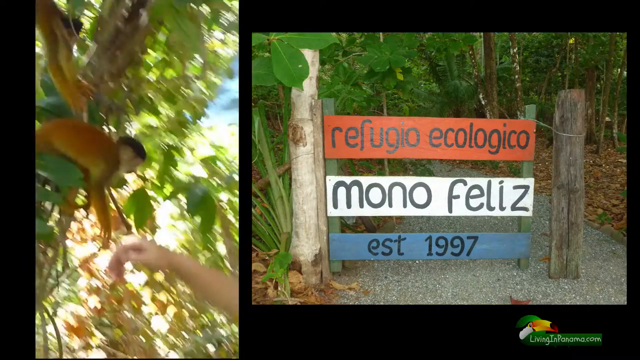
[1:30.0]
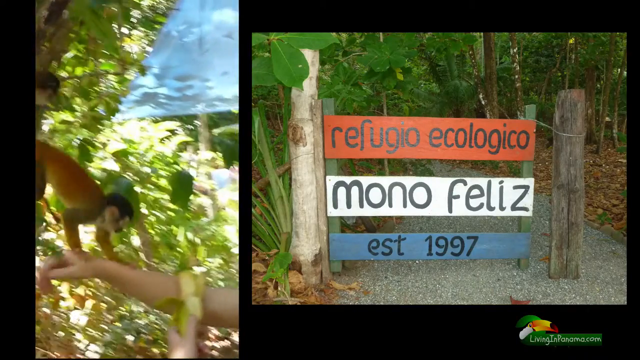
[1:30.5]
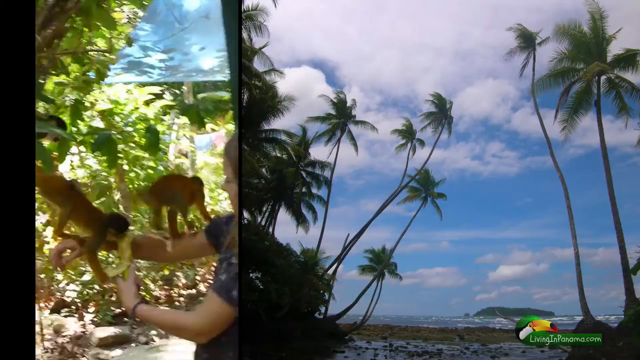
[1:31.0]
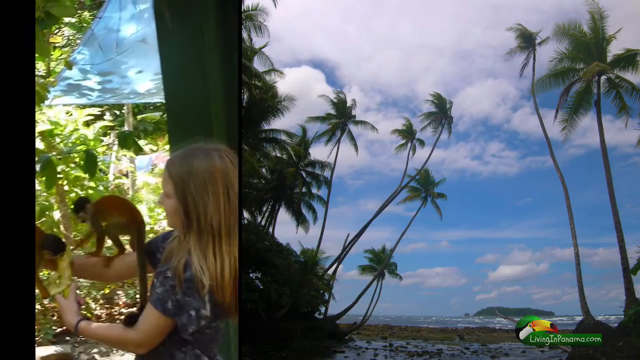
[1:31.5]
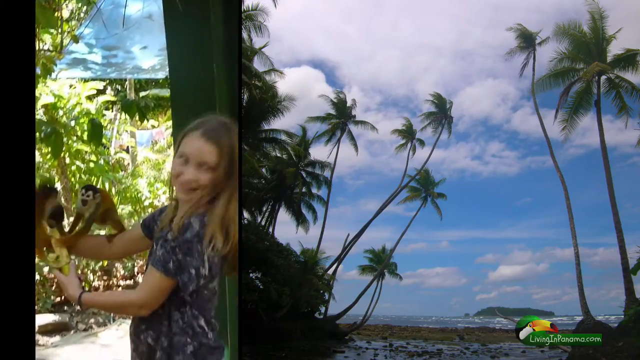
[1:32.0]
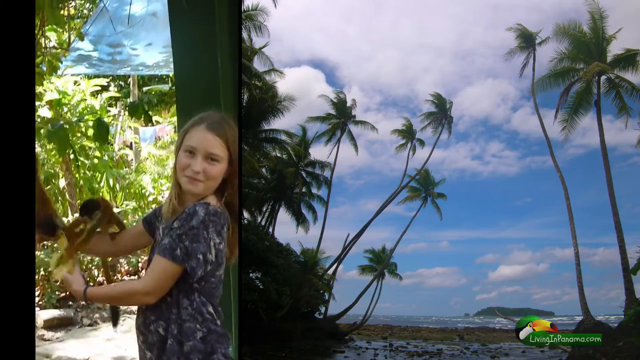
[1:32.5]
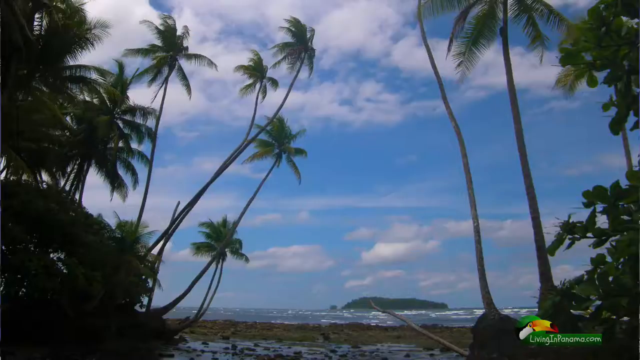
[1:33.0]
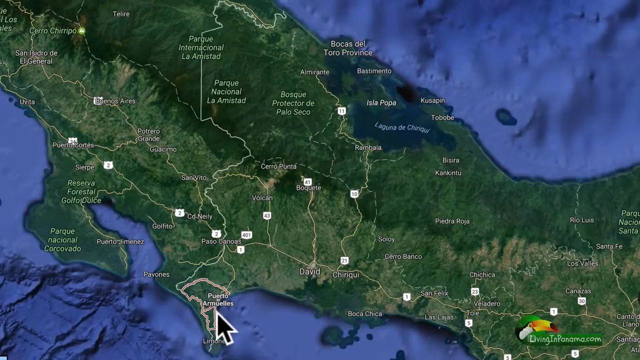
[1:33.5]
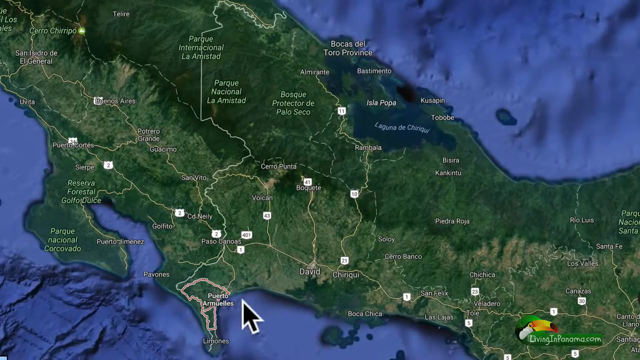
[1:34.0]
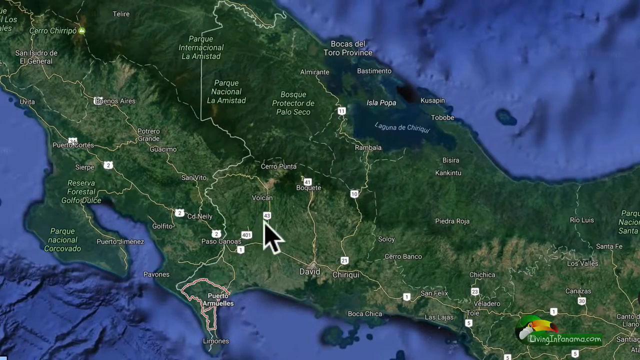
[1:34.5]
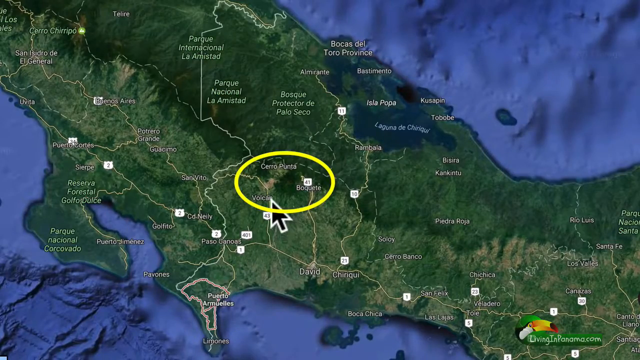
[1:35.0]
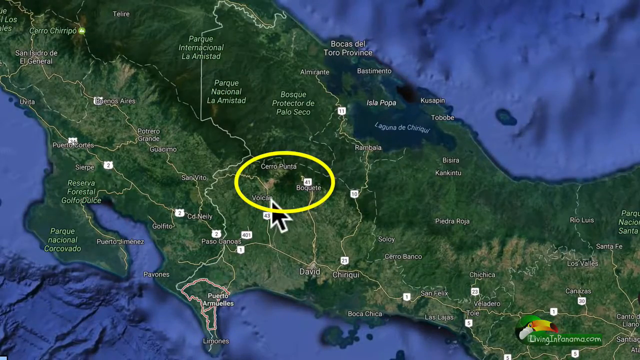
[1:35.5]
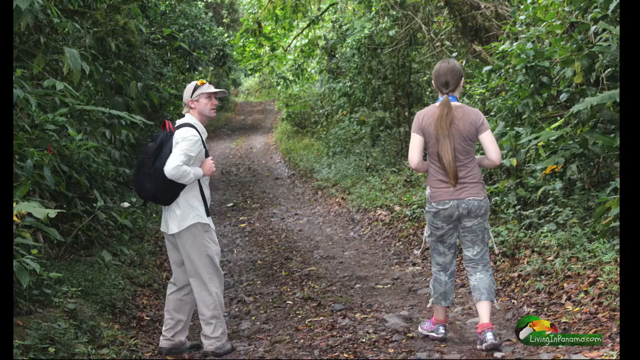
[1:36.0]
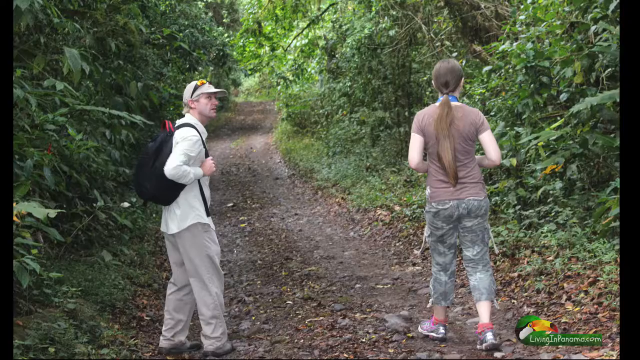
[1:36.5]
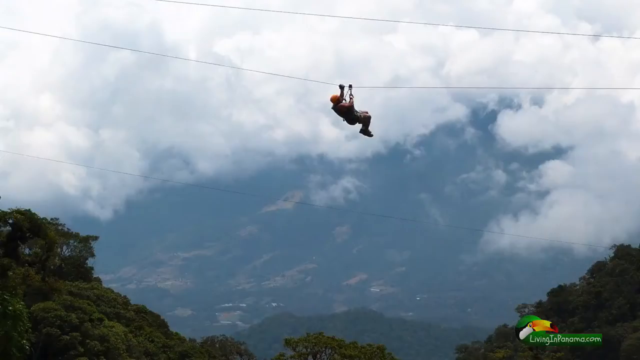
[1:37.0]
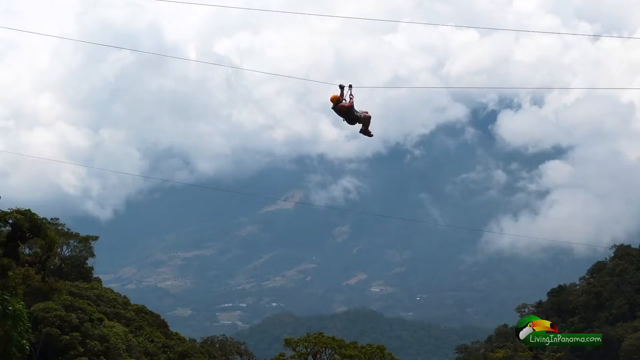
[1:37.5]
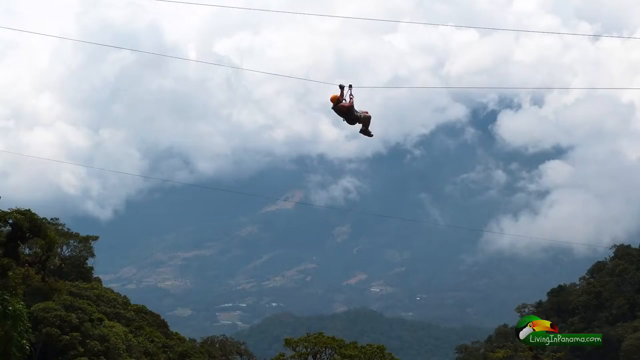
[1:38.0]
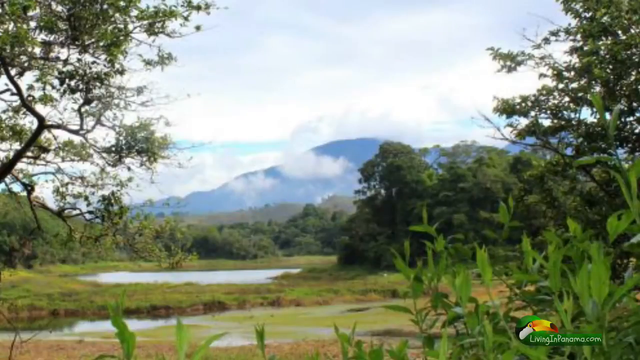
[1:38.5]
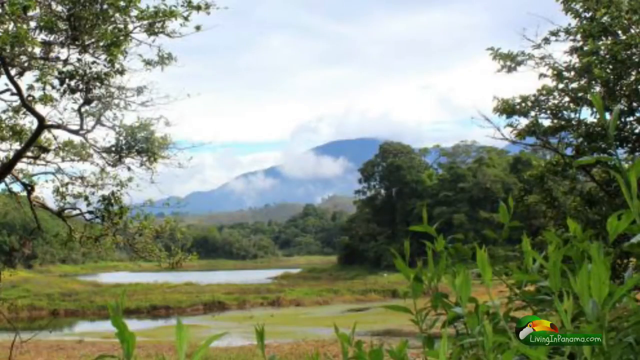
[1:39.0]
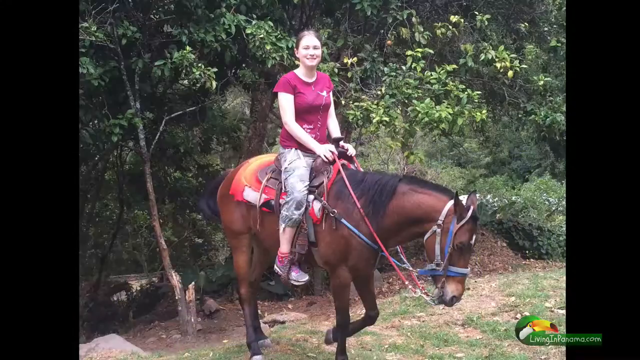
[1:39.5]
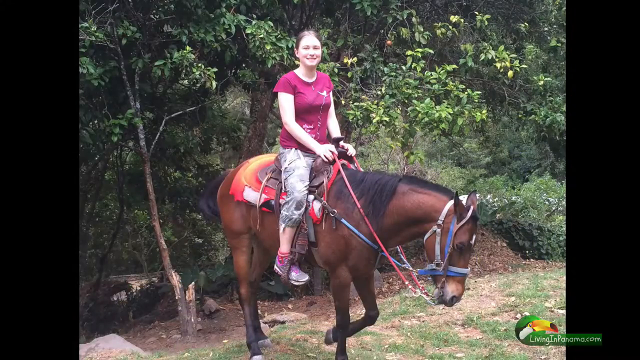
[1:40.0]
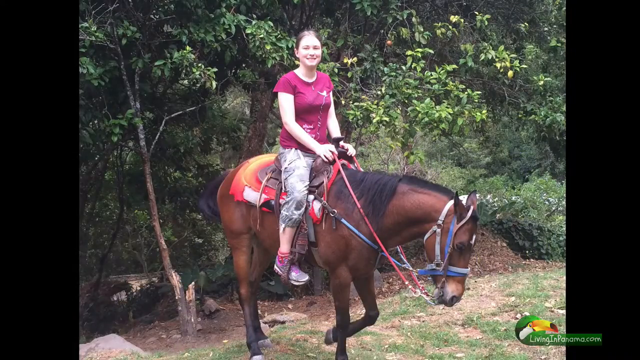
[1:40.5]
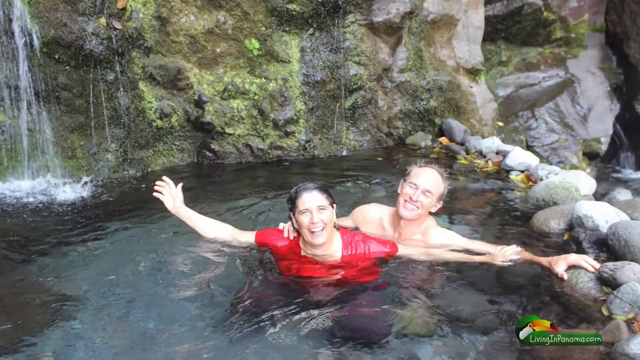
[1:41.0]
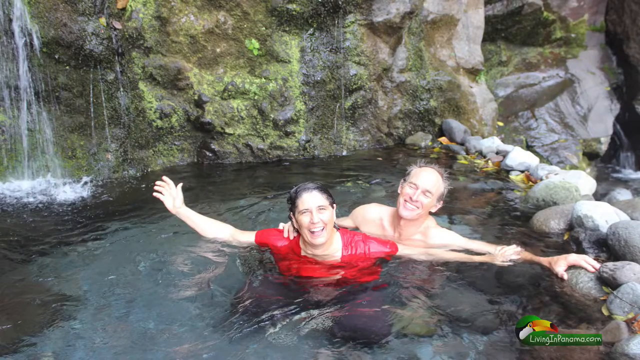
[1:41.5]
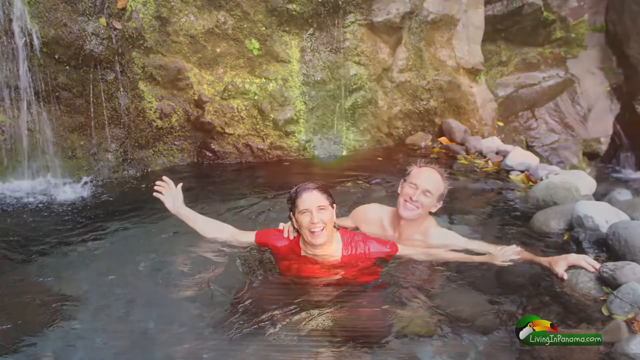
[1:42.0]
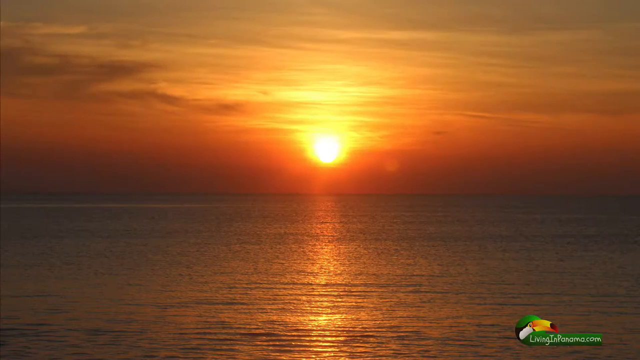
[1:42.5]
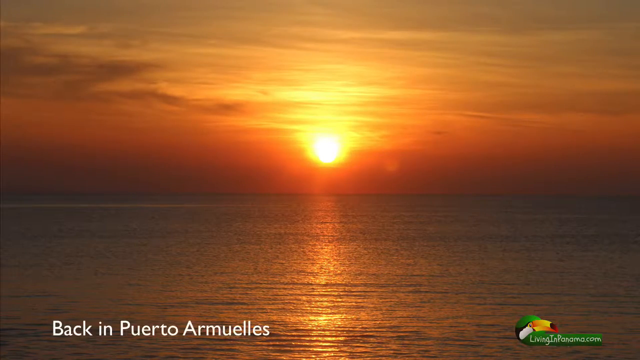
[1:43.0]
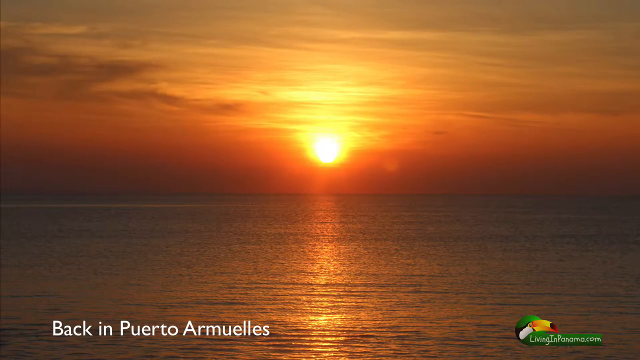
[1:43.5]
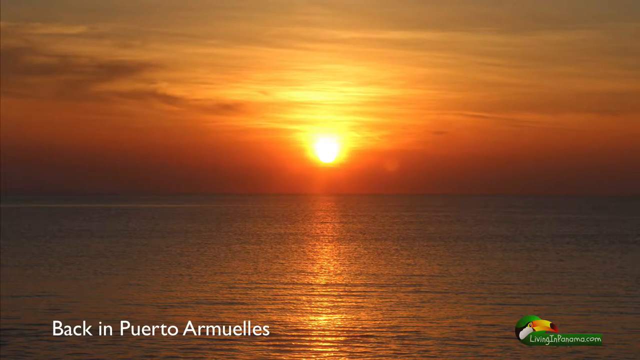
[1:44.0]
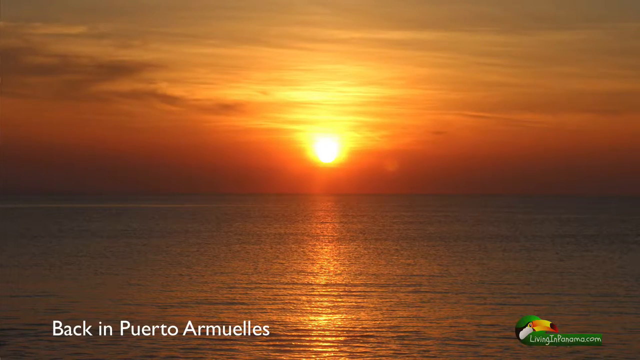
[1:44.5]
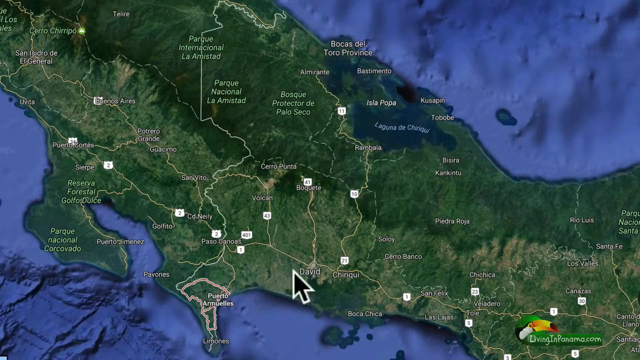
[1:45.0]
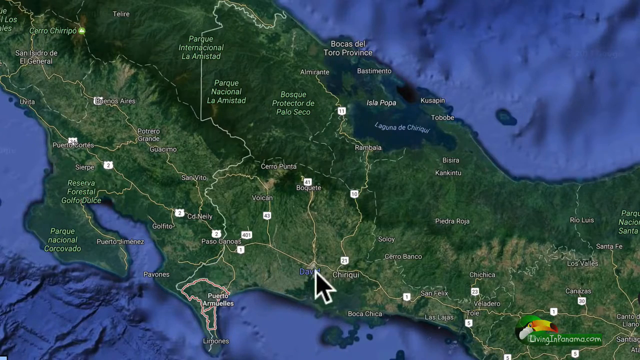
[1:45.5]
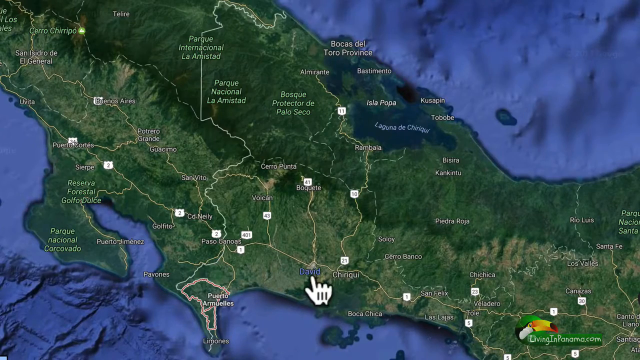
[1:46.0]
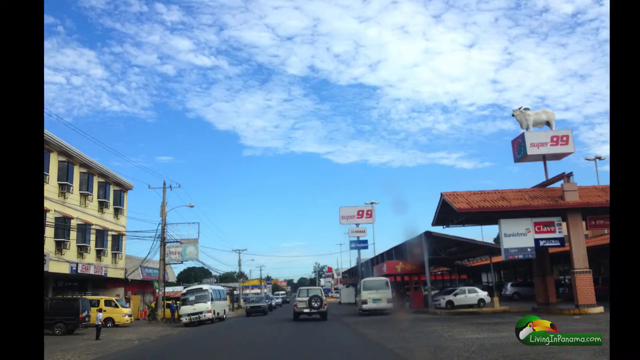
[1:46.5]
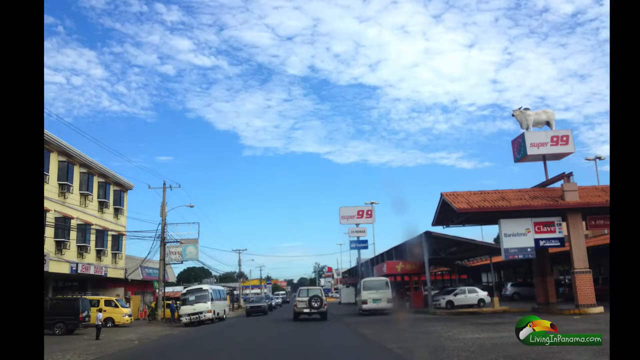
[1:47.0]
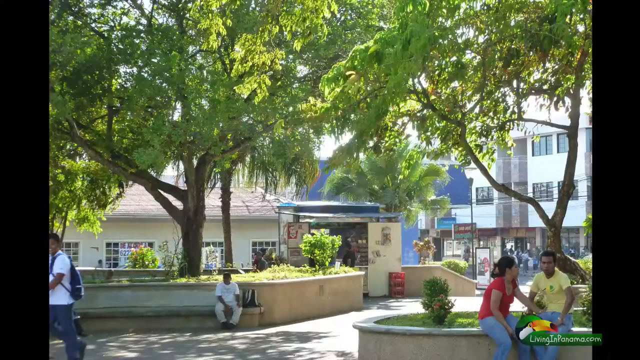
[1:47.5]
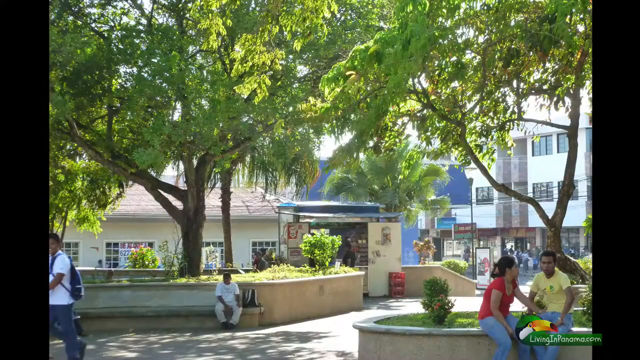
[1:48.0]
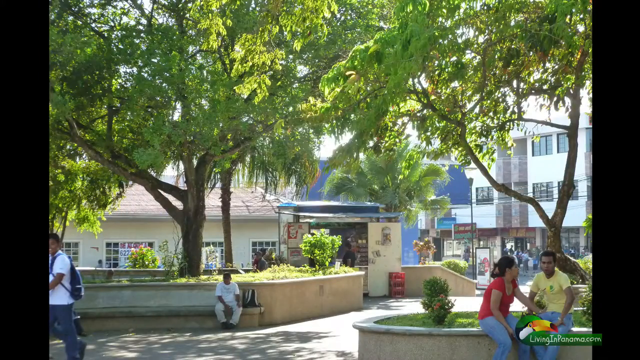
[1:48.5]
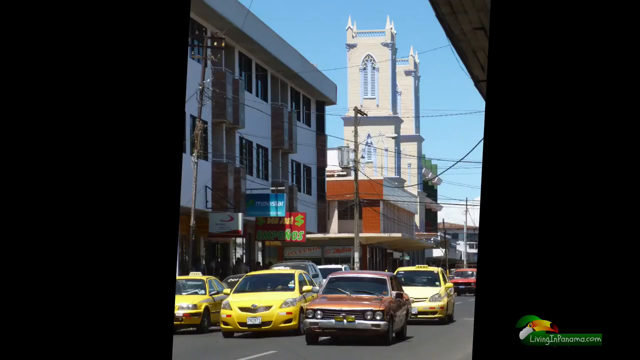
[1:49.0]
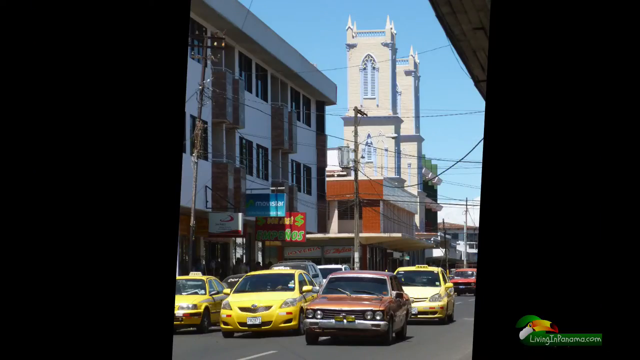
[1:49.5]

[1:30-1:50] Two pictures appear: on the left, a monkey in a tree with a person's hand reaching out to it, and on the right the text "Refugio Ecologico Mono Felice, established 1997". The monkey climbs over what looks like a girl's hand and there is another monkey, while on the right there is an image of the sky with white clouds and palm trees. On the left, the girl looks to the camera and smiles while the monkeys climb up and down her arms. The video cuts to the full-size palm tree image, with an island out at sea in the background, then to the Google image, where a large area in the middle of Panama is circled yellow. Then come two people walking through a jungle-type area, a person hanging from a zip wire with large white clouds behind them, a girl wearing a pink top sitting on a horse, and a man and a lady sitting in a natural pool of water, both with their arms out, smiling at the camera. A sunset photo over the beach area follows, then some images of a city centre with cars and shops on show.